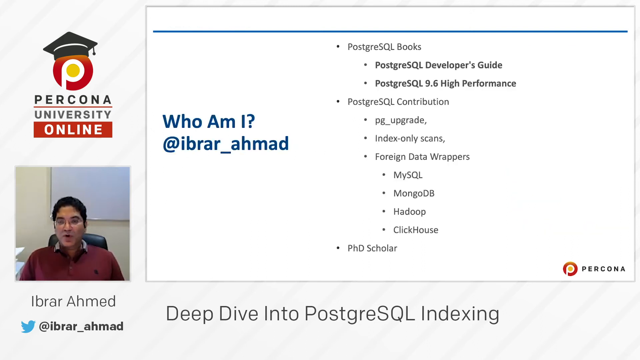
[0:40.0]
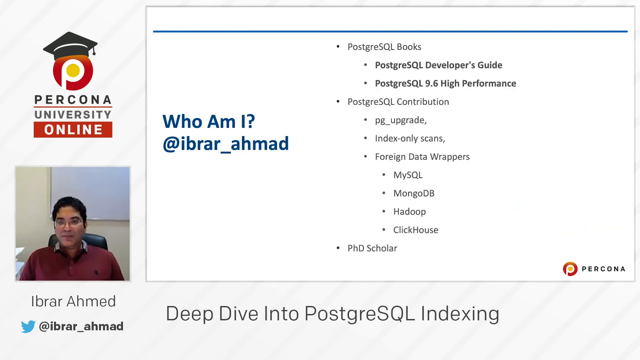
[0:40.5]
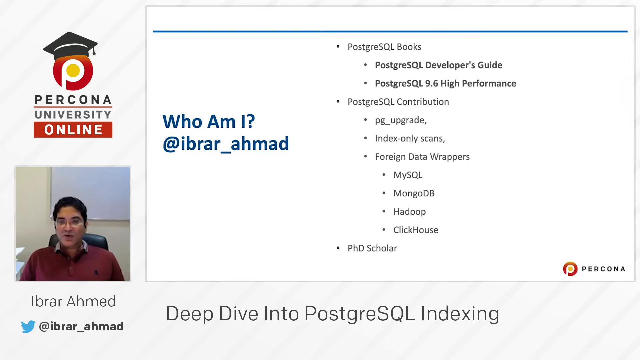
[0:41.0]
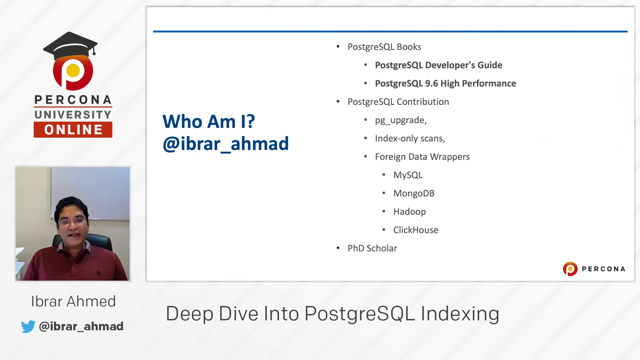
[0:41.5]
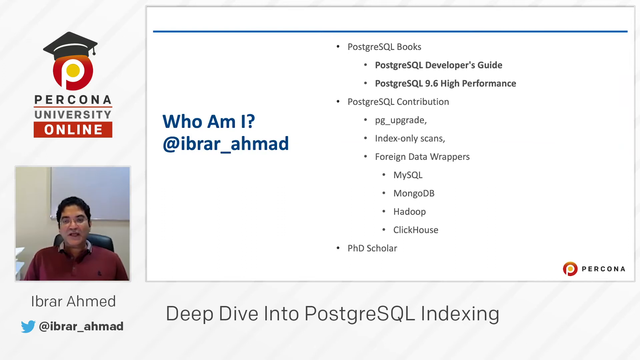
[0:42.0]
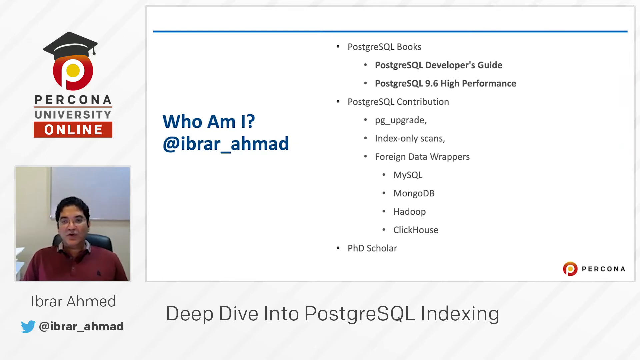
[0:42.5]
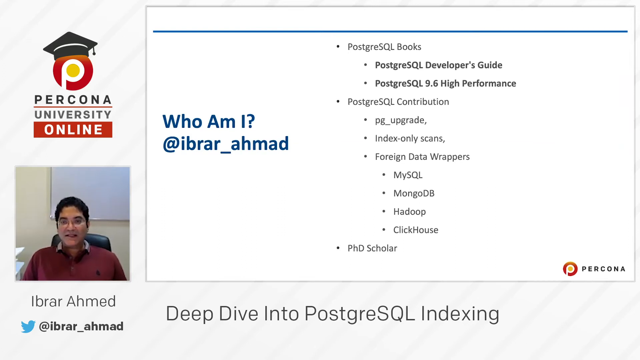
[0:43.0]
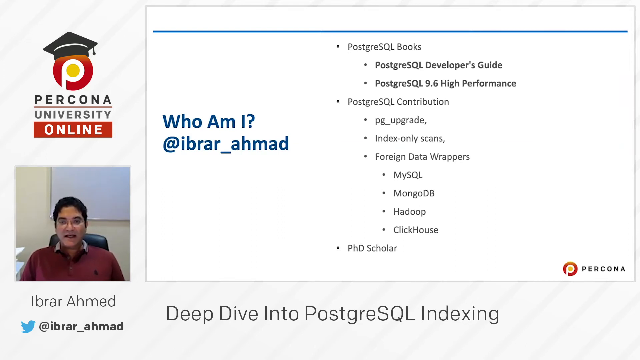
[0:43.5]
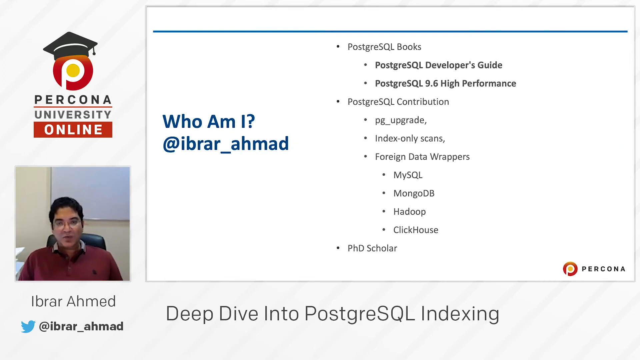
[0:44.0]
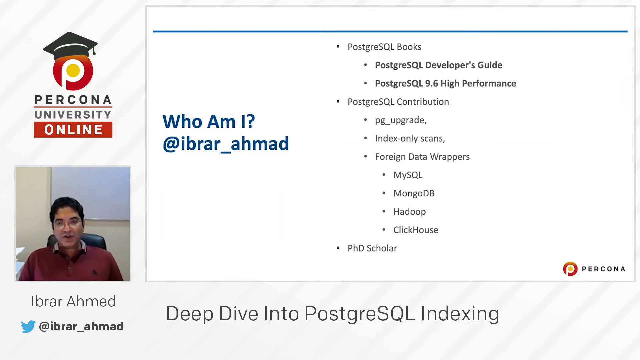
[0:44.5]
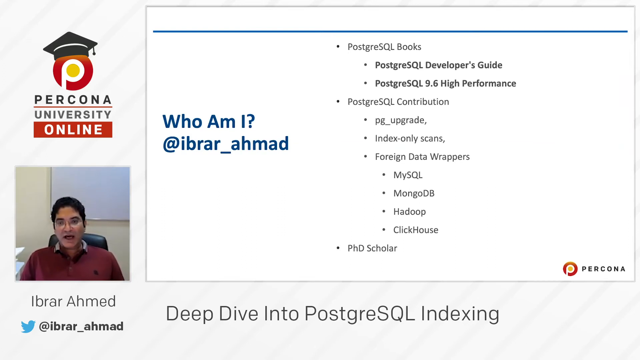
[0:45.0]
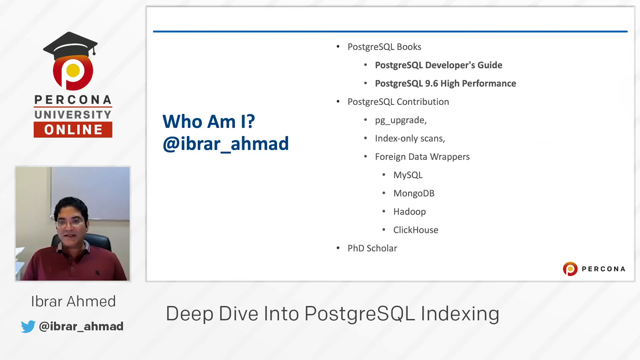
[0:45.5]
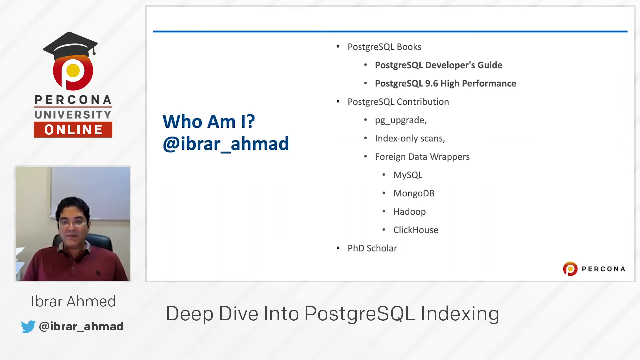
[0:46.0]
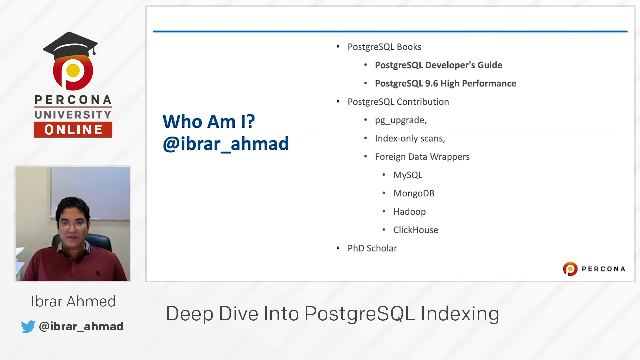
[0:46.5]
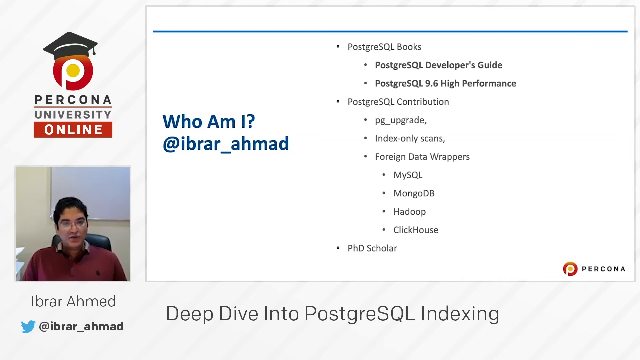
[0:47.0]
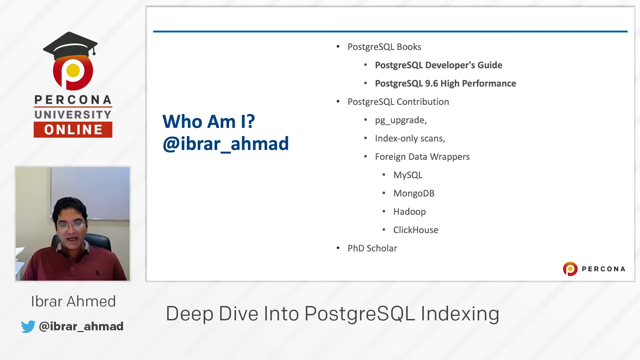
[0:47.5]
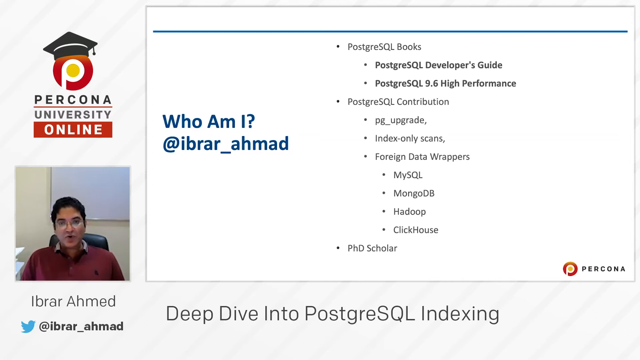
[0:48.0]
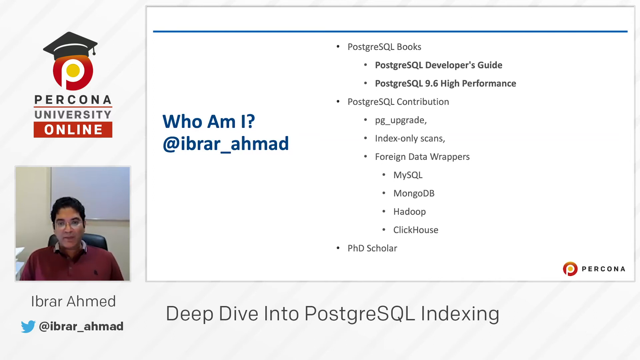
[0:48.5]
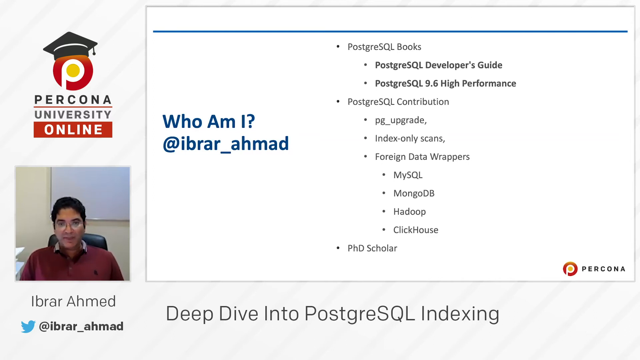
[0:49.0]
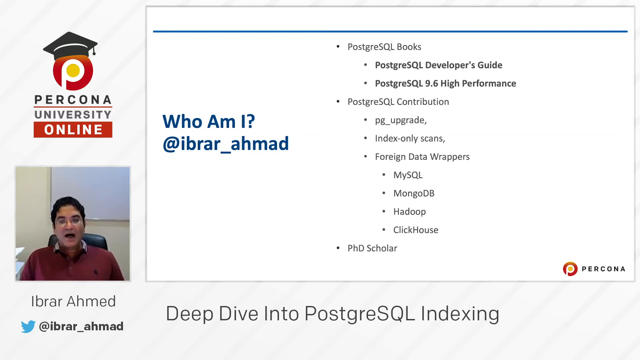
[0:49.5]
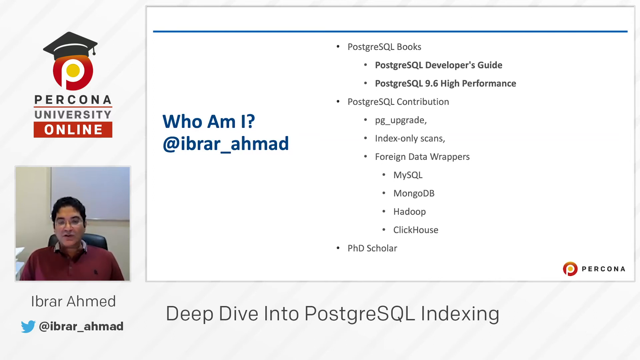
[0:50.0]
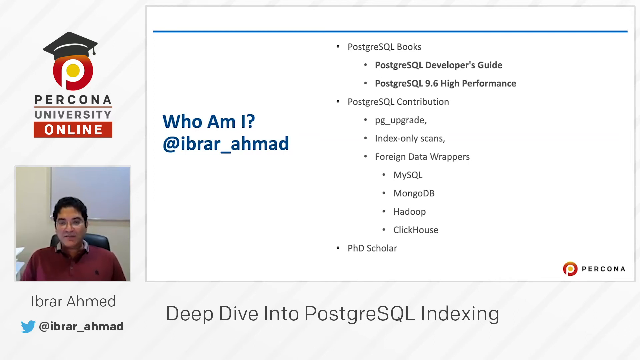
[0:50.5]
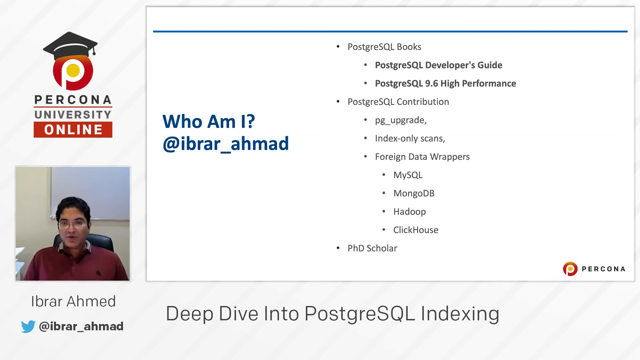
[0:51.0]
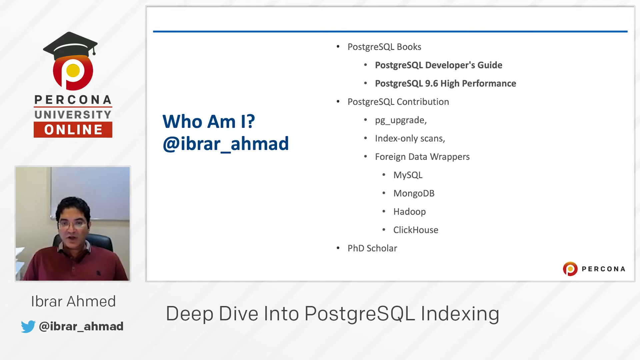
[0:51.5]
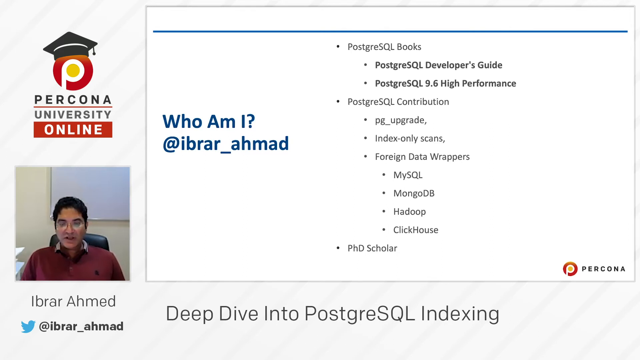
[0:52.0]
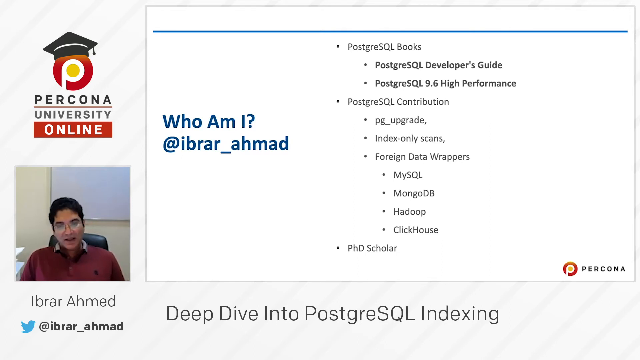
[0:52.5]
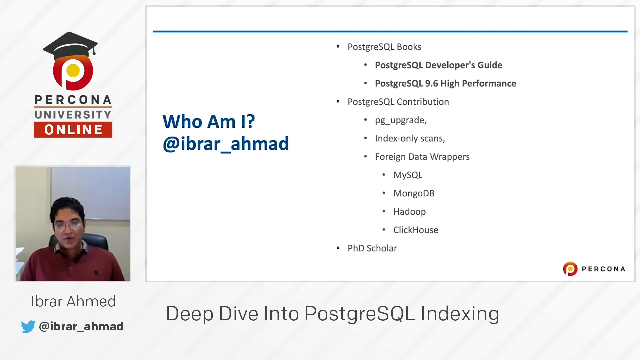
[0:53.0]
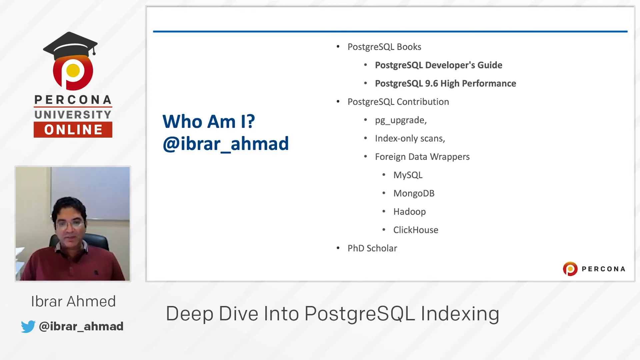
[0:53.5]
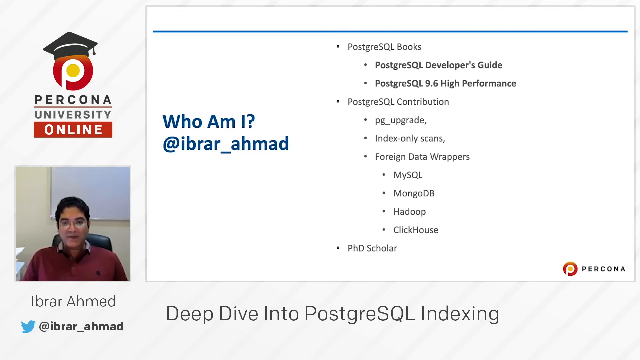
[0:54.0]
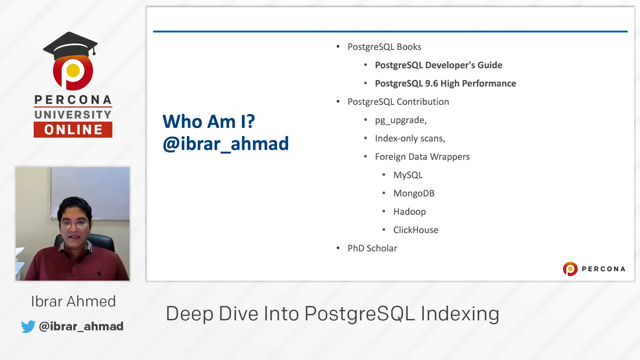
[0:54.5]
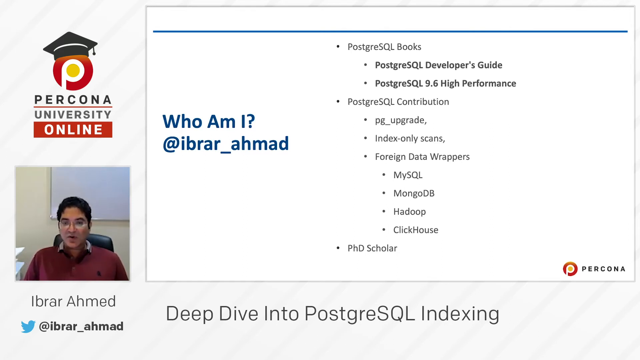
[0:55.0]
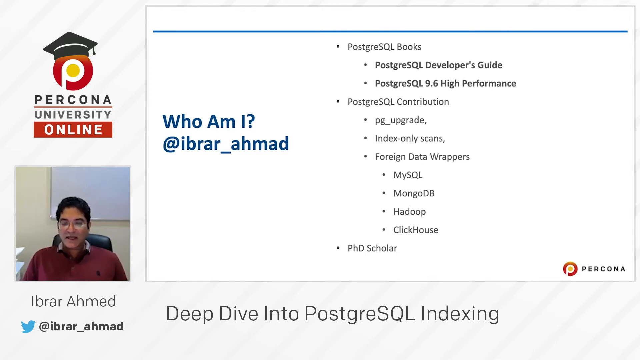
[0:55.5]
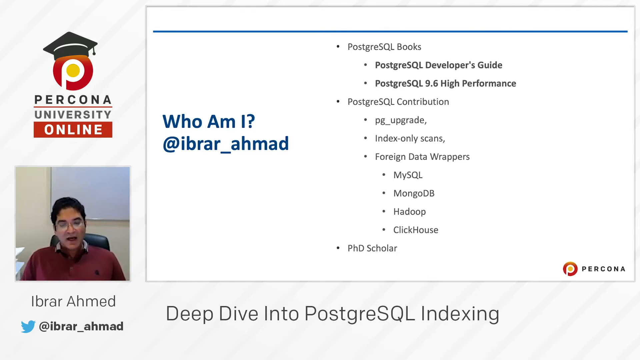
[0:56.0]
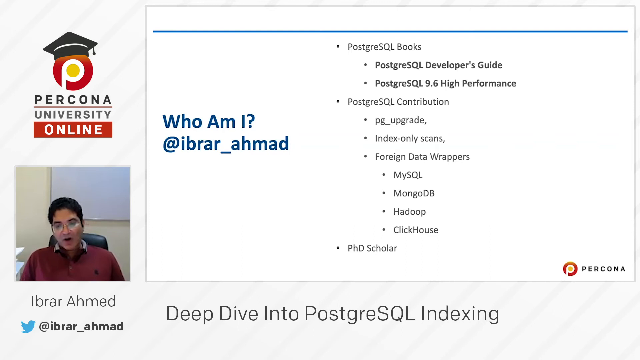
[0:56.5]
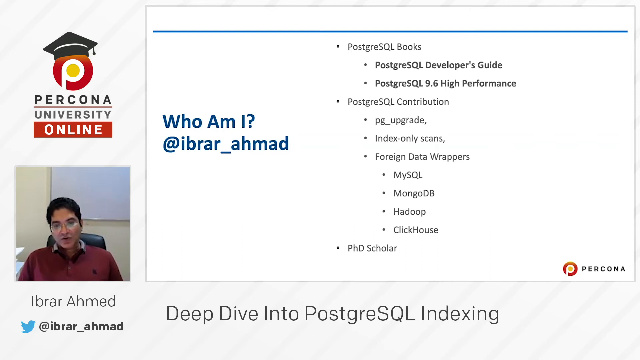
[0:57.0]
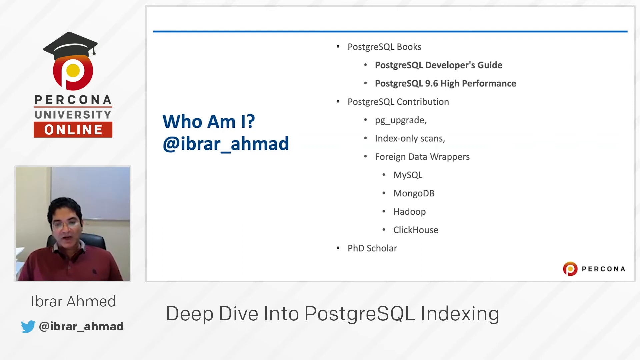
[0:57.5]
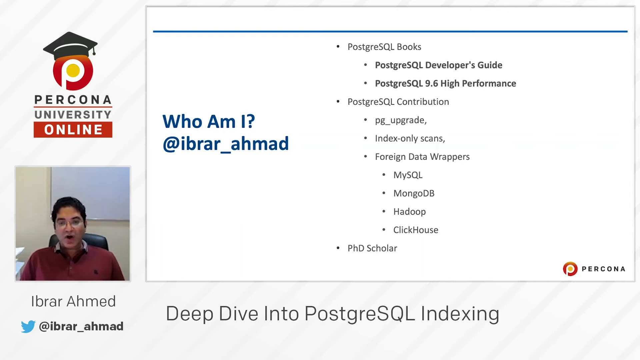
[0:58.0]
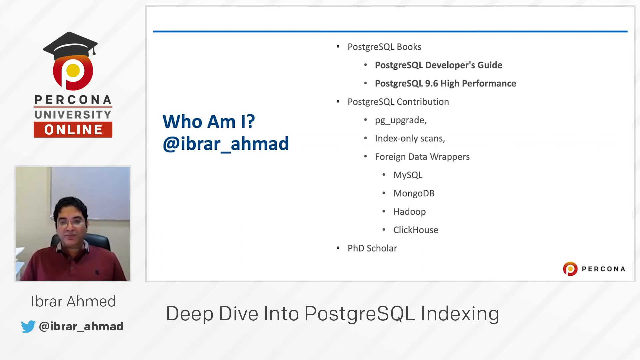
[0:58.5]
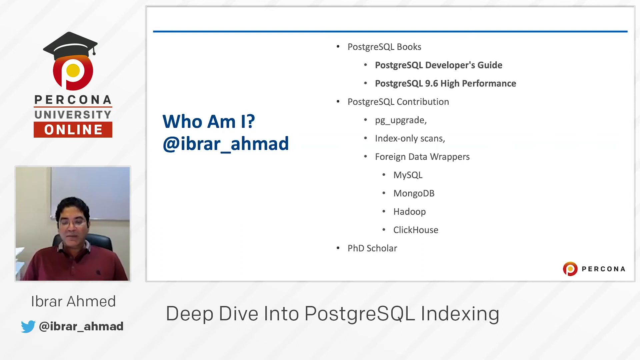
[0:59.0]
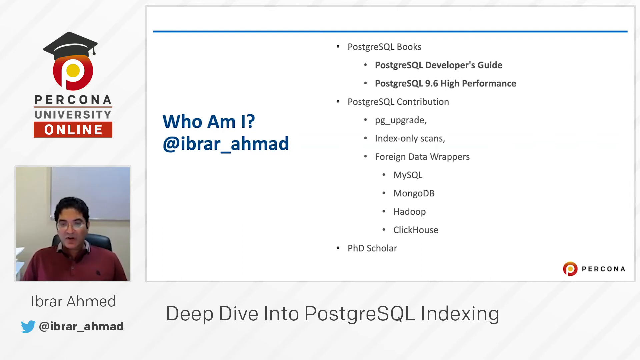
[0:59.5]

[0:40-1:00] A screen has a blue line at the top and bold blue text reading "who am I, Ibrar_Ahmed," with black bulleted text reading "PostgreSQL books, PostgreSQL developers guide, PostgreSQL 9.6 high performance, PostgreSQL contribution, PG_upgrade index only scans foreign data wrappers MySQL MongoDB Hadoop ClickHouse and PhD scholar." Beneath that is a Percona icon with black text and a small red circle with a pink or white P and a small white or yellow circle in the center. The same circle with the P appears on the left side wearing a graduation hat, with text reading "Percona University" and a red line in the center of it, and a red box with white text reading "online." A video shows a man with glasses who looks Indian, talking to the camera, with his name under the video stream along with a Twitter bird and his Twitter handle.